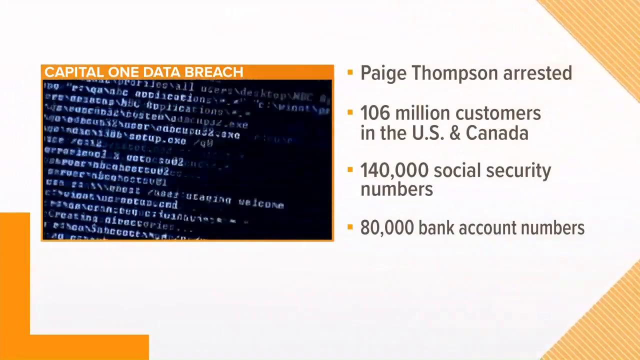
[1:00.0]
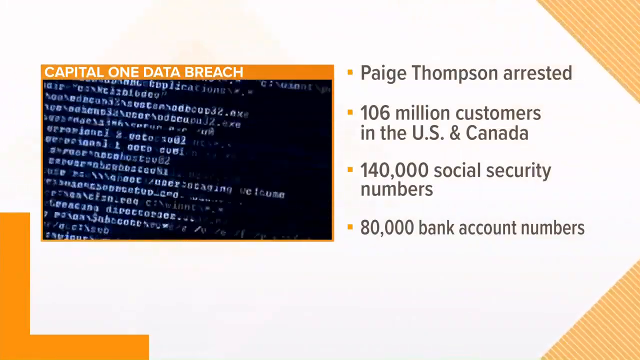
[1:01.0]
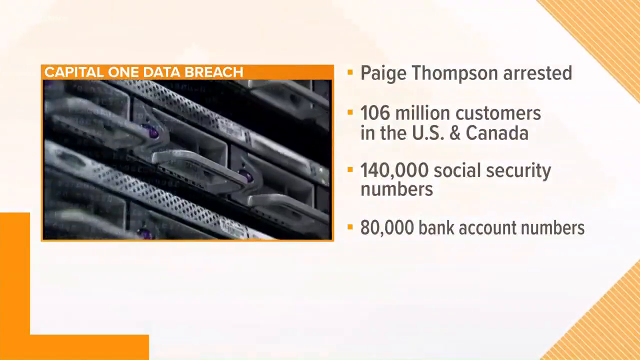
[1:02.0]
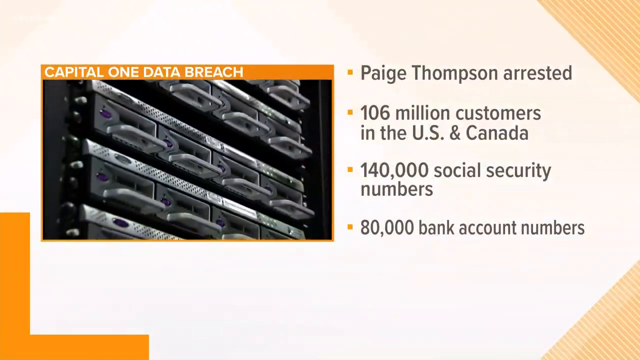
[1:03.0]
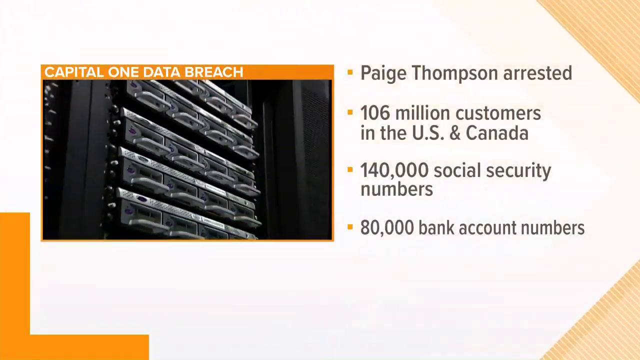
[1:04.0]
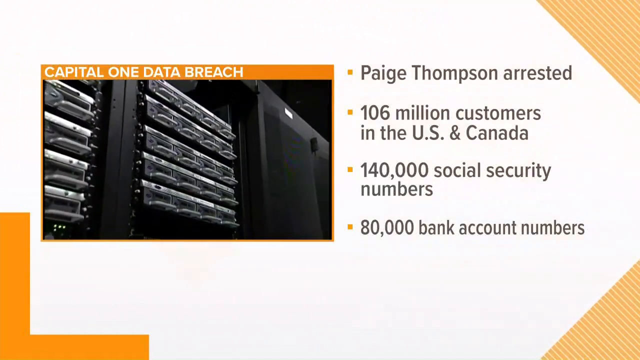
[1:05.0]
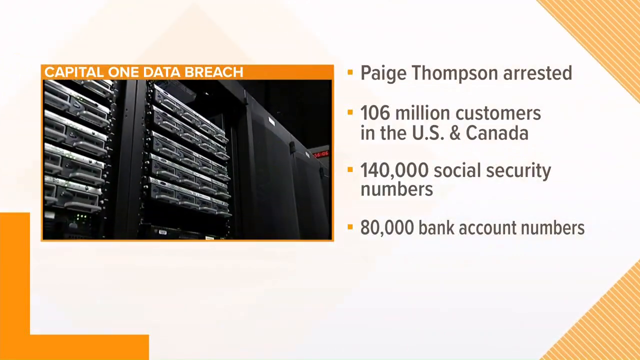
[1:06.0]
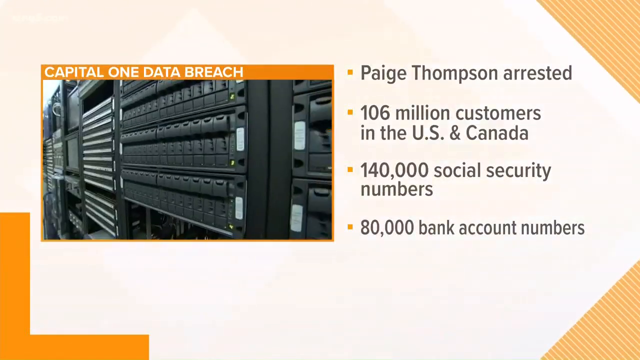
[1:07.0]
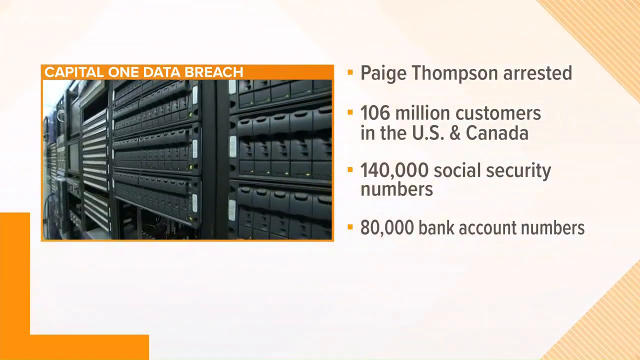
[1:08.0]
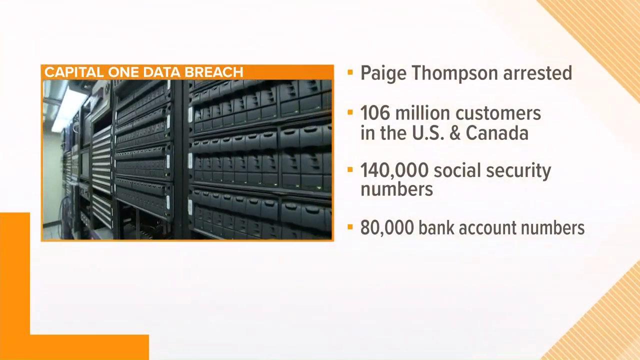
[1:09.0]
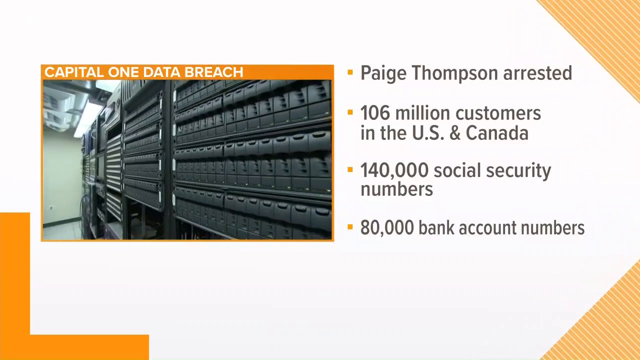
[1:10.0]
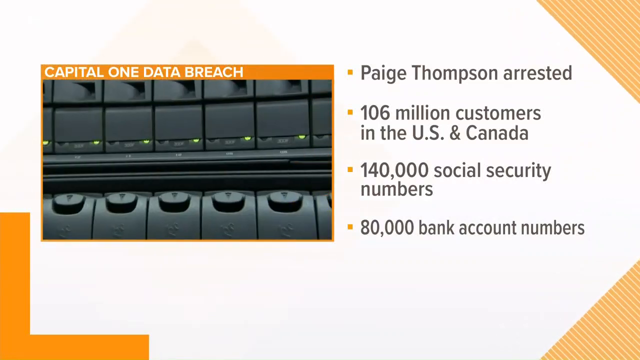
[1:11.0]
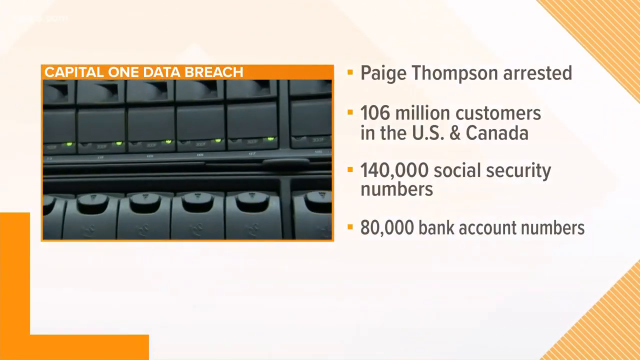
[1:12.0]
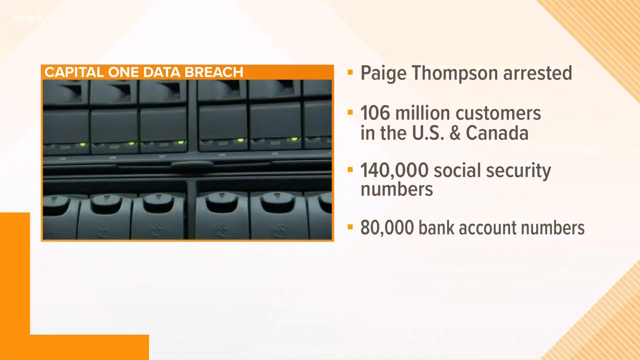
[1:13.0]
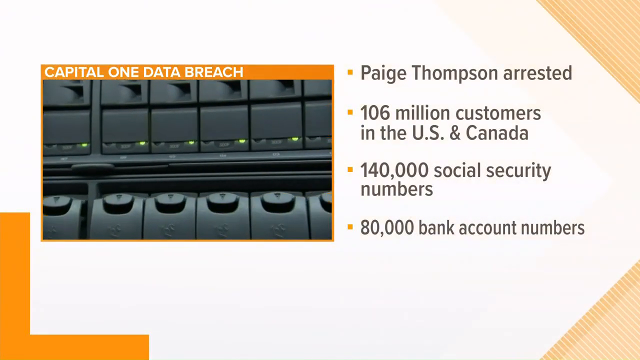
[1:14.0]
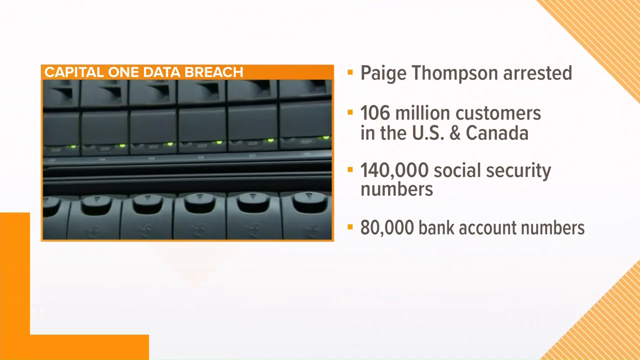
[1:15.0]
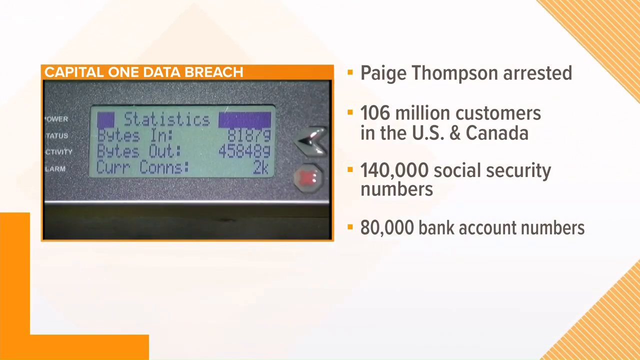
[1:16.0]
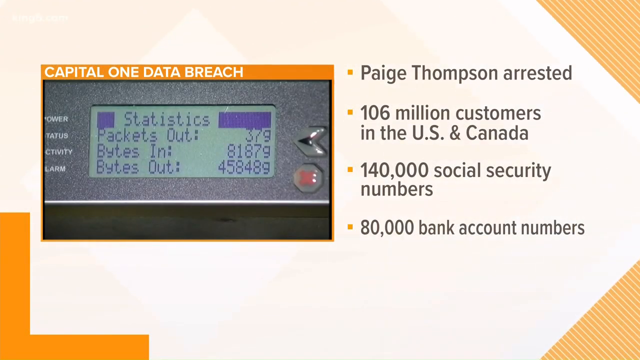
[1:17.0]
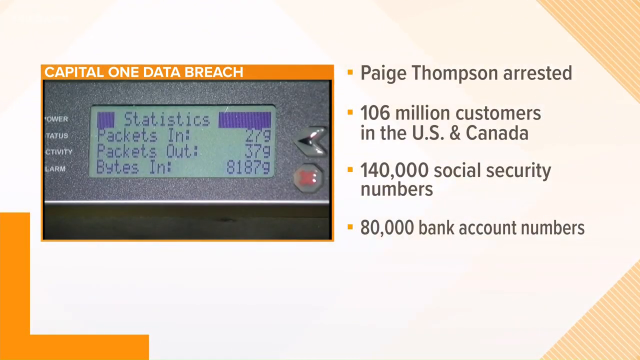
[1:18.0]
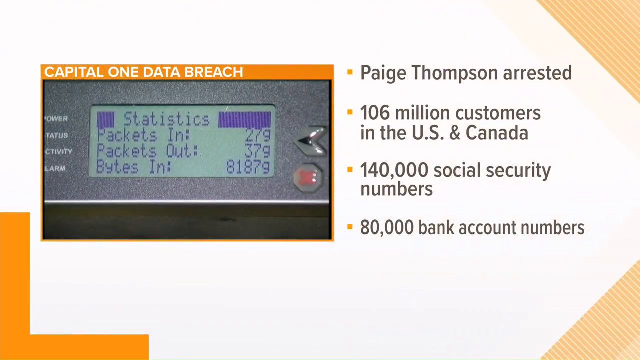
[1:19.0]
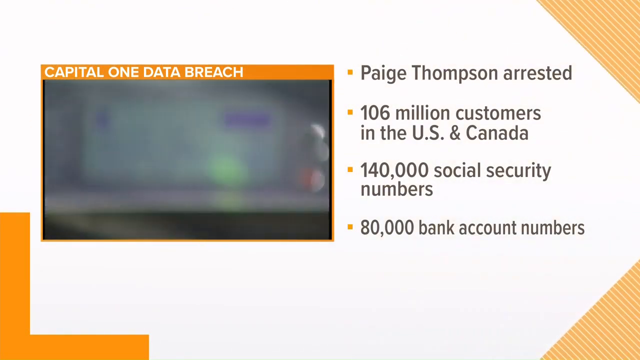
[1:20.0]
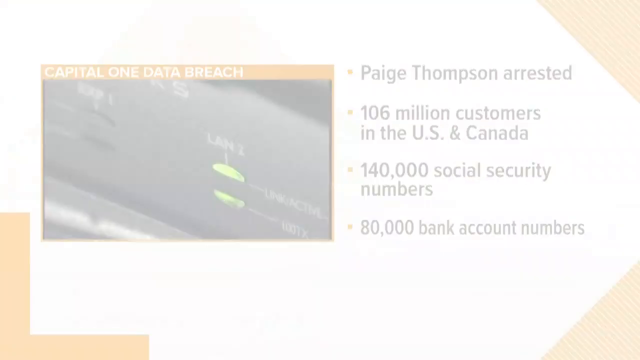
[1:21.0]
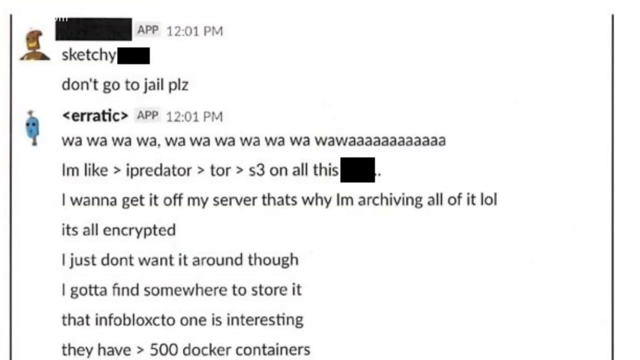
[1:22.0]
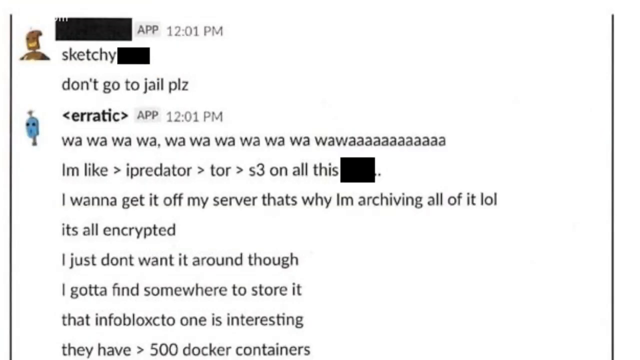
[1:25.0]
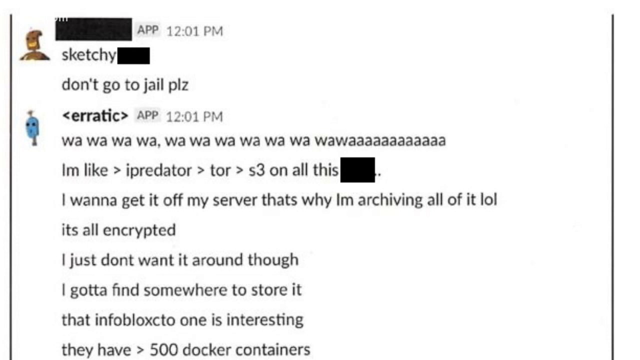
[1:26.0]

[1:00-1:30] Footage of written code plays on the left side of the screen under the title "Capital One Data Breach", while captions on the right read "Paige Thomson arrested", "106 million customers in the US and Canada", "140,000 social security numbers" and "80,000 bank account numbers". A data center is then shown, and on one machine the words "Statistics Packets in 27g Packets out 37g" are visible. Meanwhile, quick cuts show the storage unit and the background, and some deep yellow, almost golden parts appear on the screen.